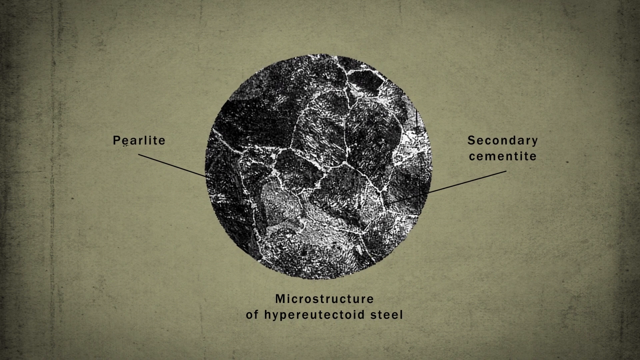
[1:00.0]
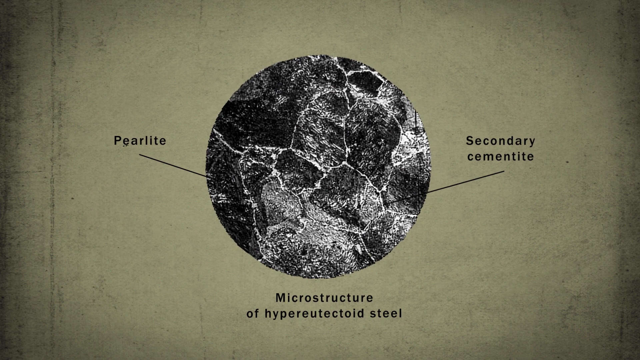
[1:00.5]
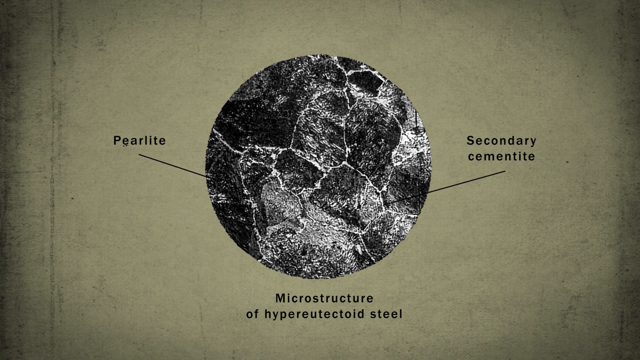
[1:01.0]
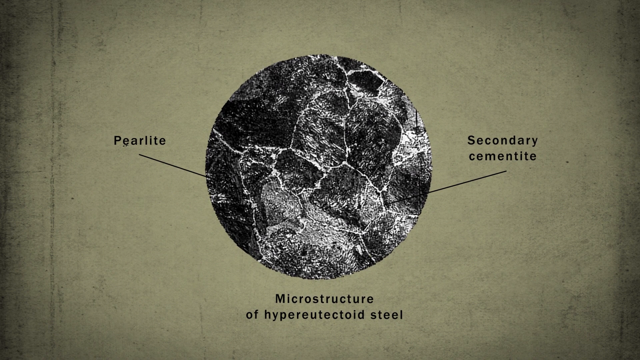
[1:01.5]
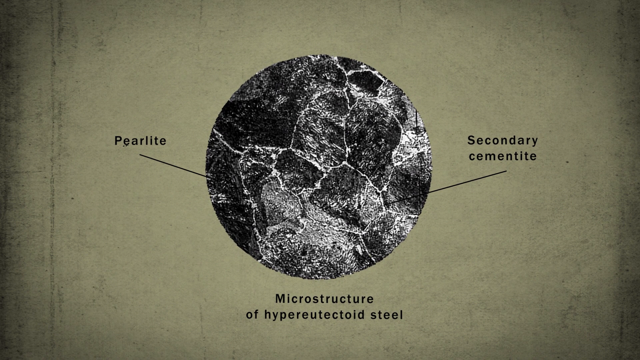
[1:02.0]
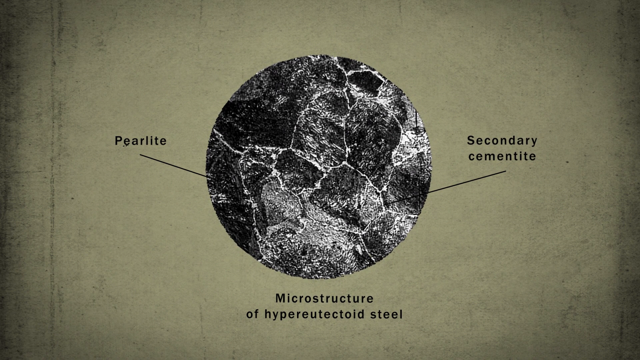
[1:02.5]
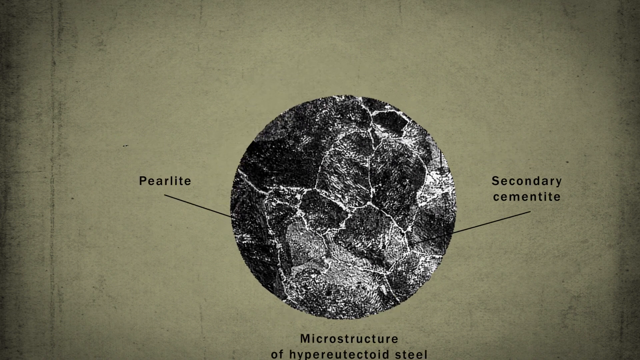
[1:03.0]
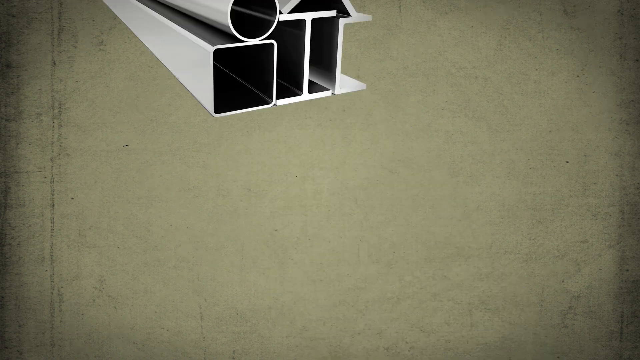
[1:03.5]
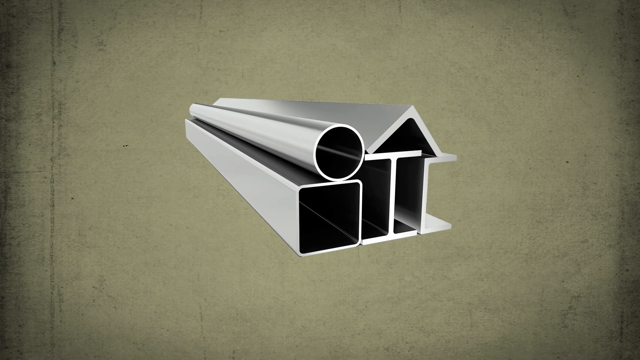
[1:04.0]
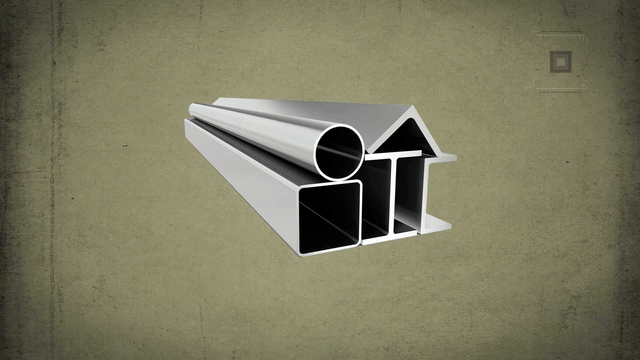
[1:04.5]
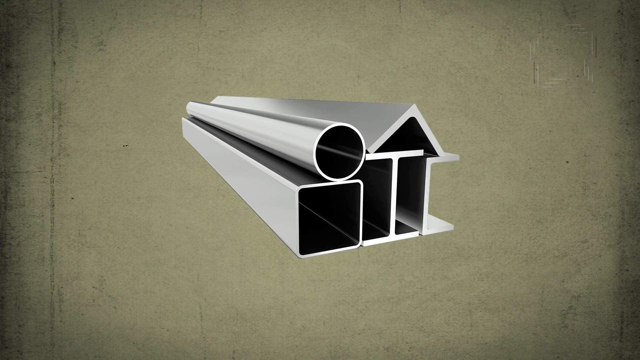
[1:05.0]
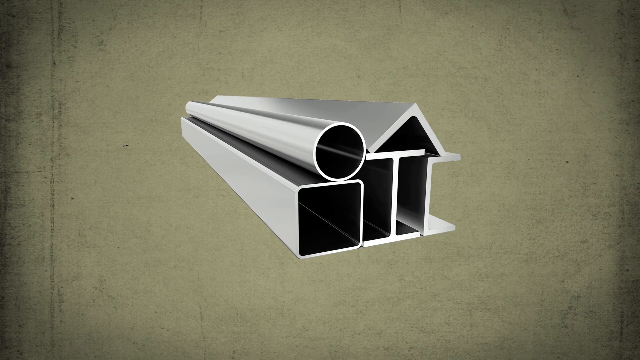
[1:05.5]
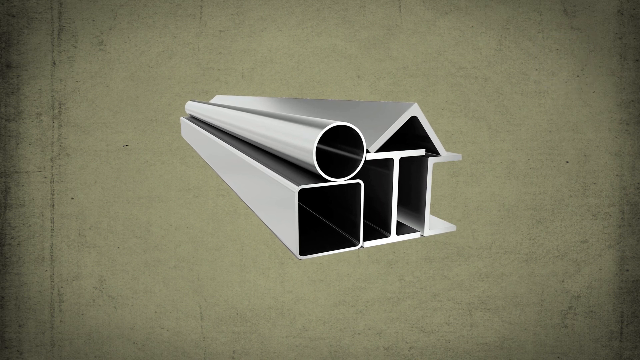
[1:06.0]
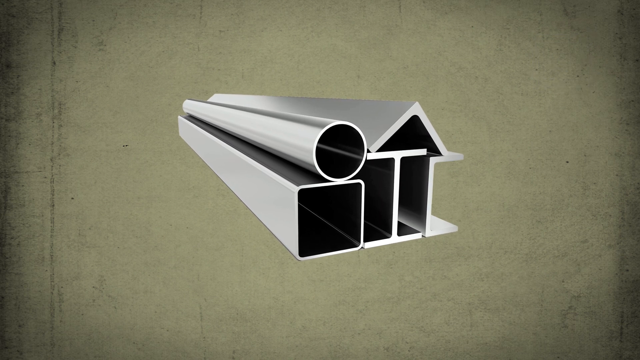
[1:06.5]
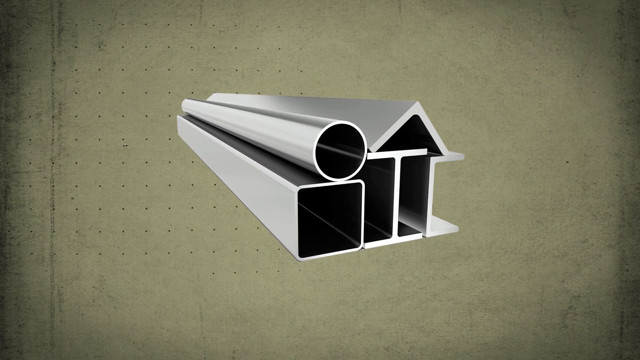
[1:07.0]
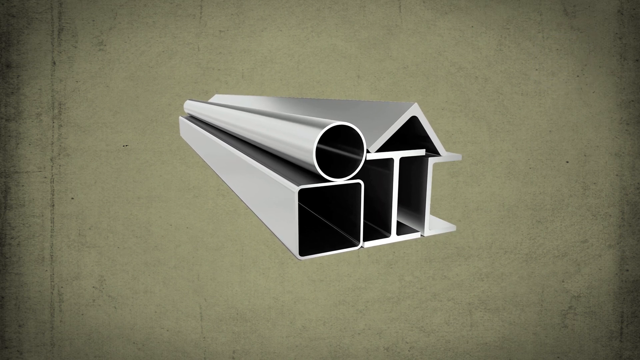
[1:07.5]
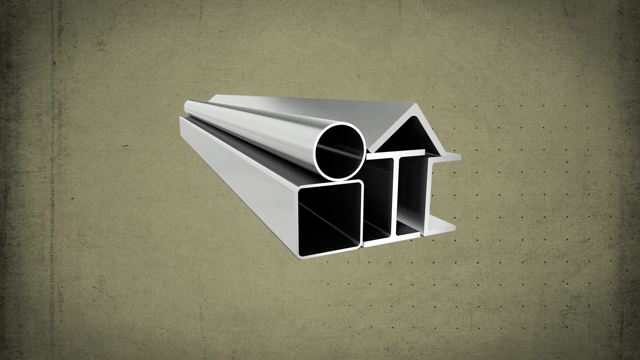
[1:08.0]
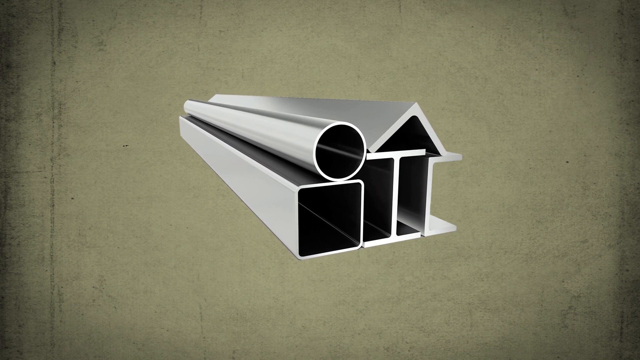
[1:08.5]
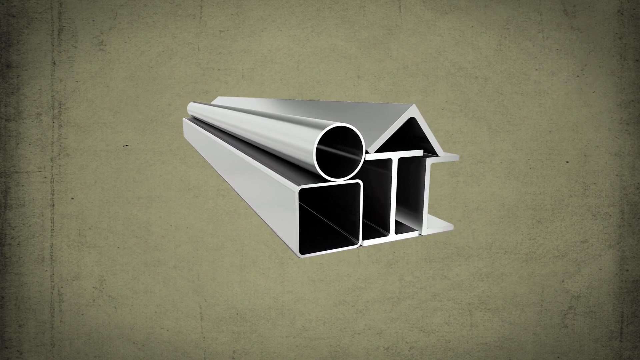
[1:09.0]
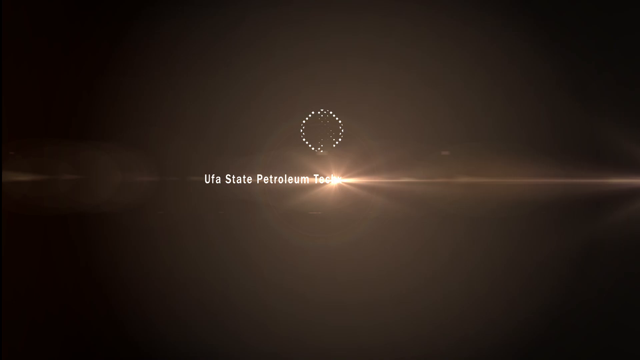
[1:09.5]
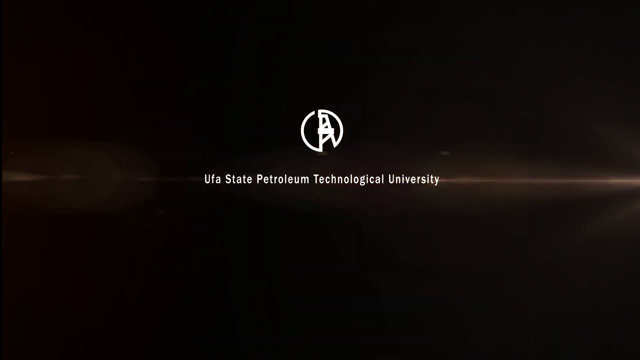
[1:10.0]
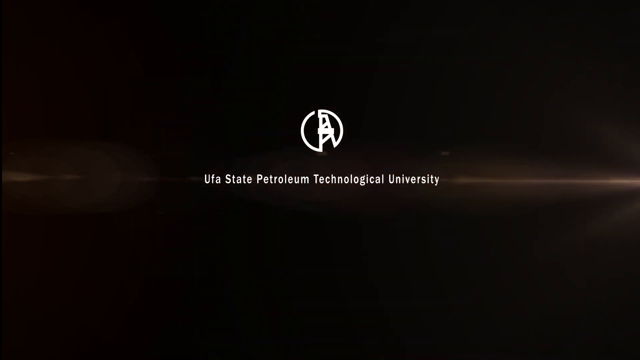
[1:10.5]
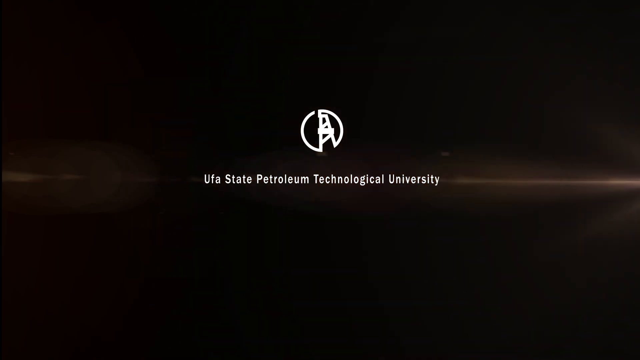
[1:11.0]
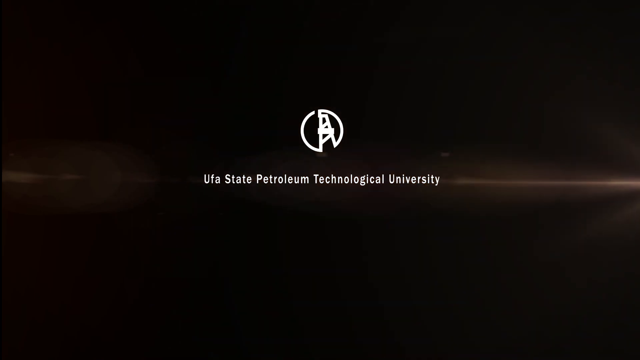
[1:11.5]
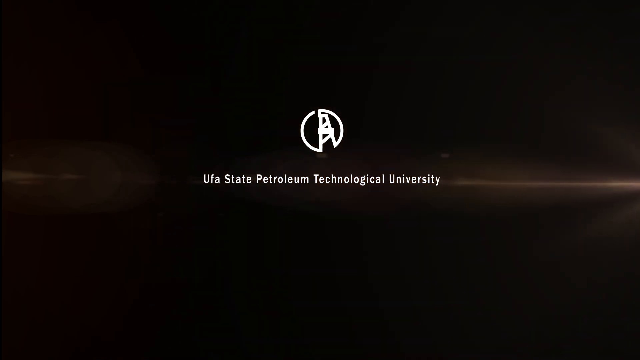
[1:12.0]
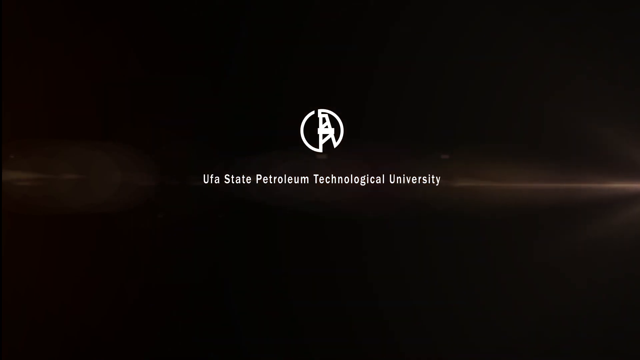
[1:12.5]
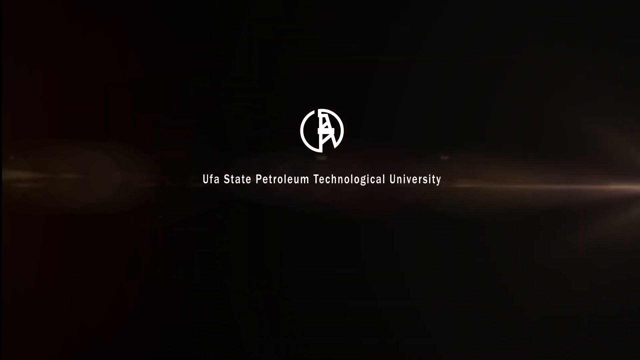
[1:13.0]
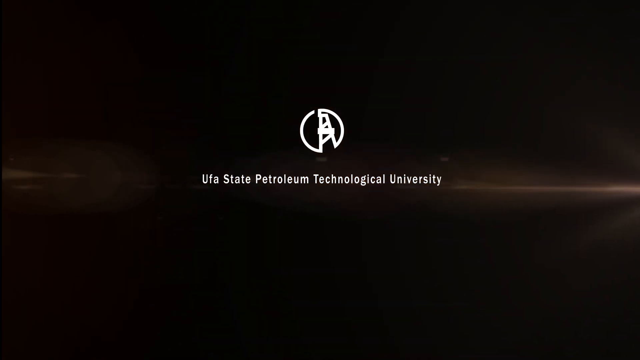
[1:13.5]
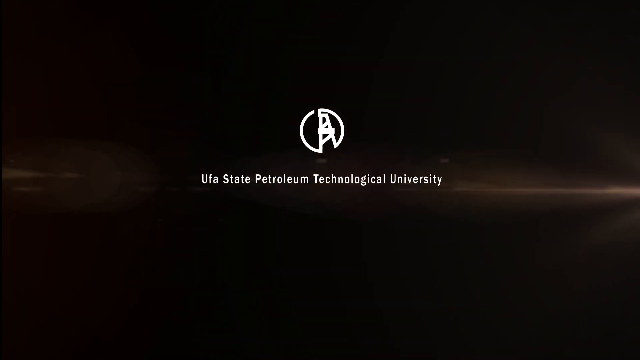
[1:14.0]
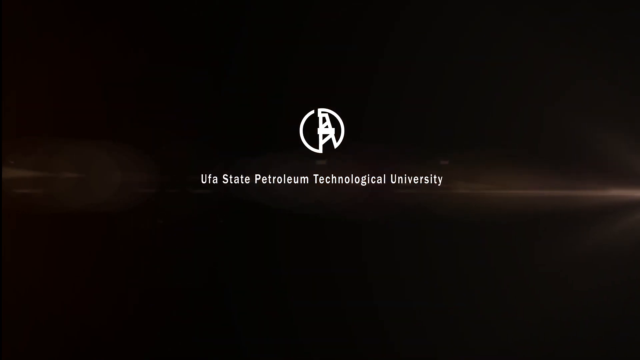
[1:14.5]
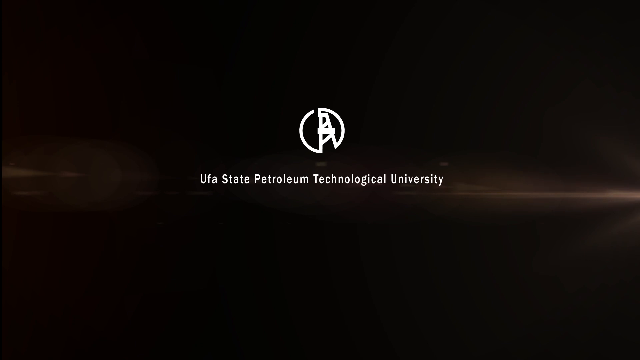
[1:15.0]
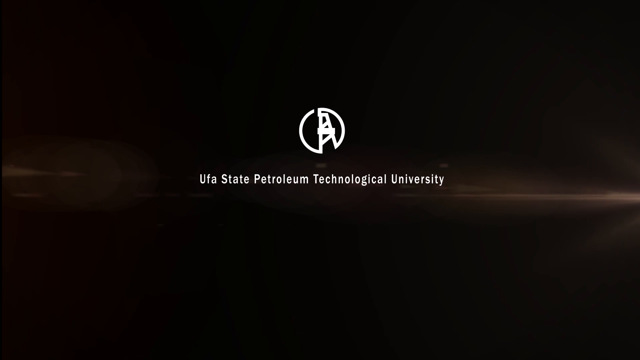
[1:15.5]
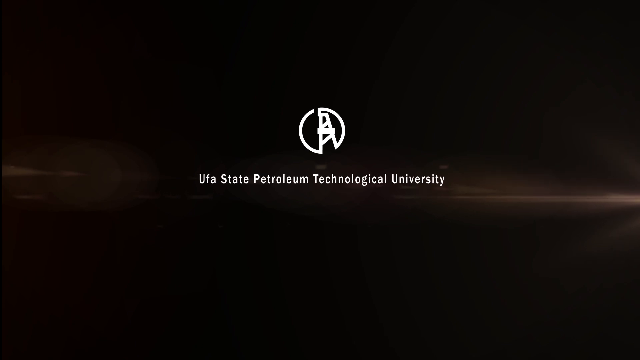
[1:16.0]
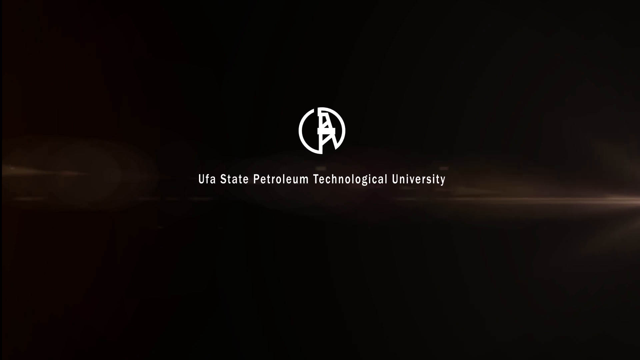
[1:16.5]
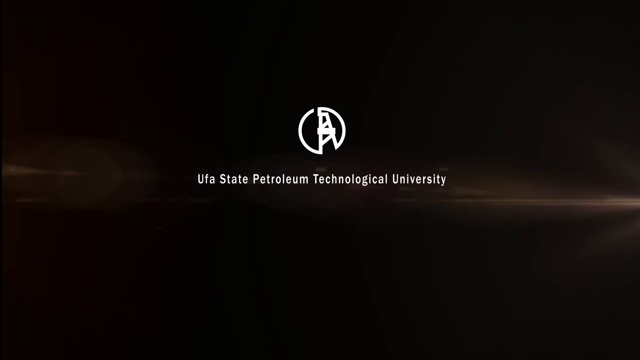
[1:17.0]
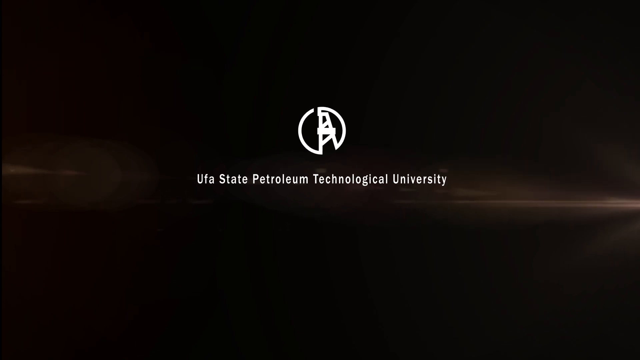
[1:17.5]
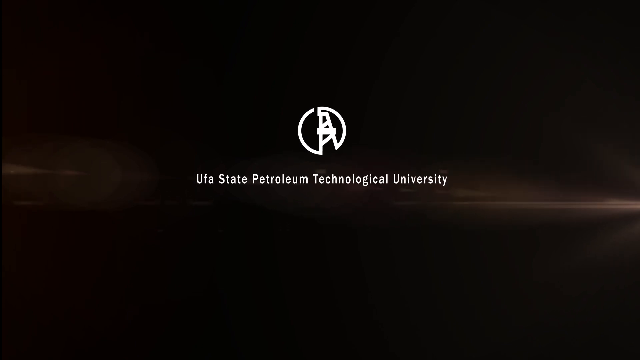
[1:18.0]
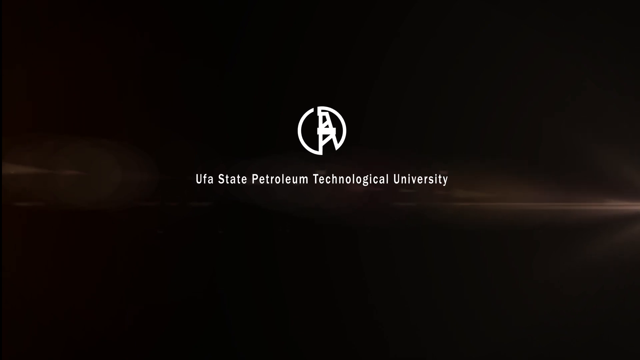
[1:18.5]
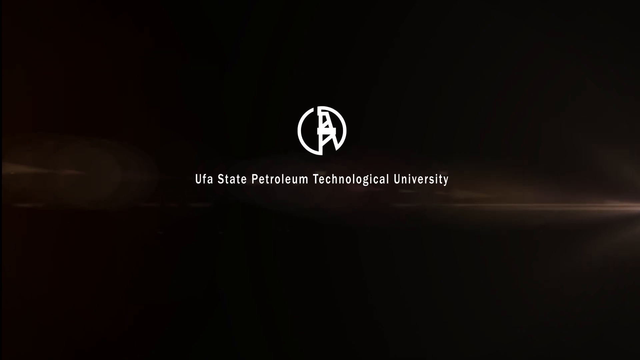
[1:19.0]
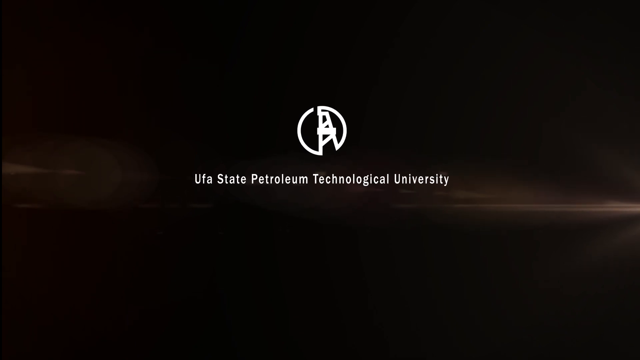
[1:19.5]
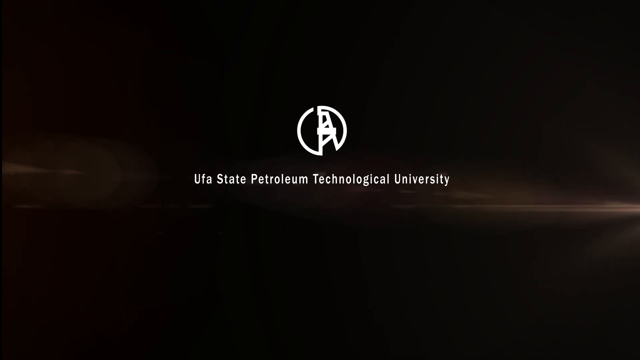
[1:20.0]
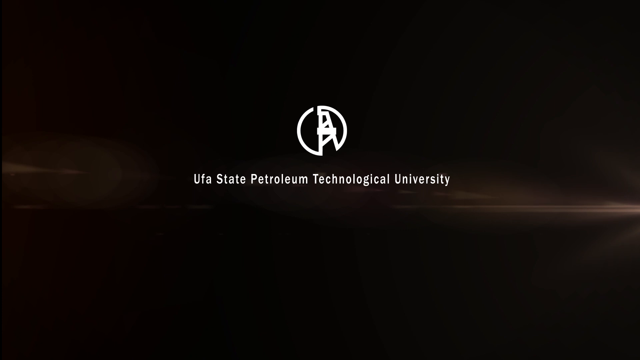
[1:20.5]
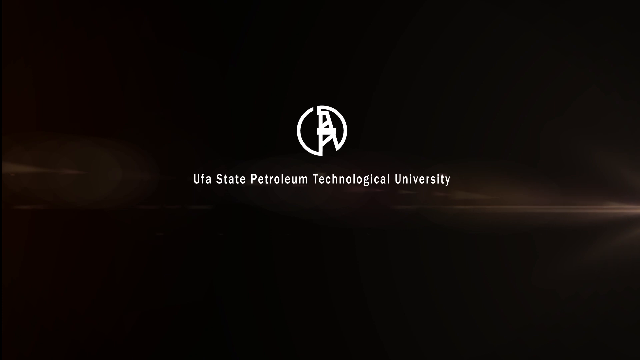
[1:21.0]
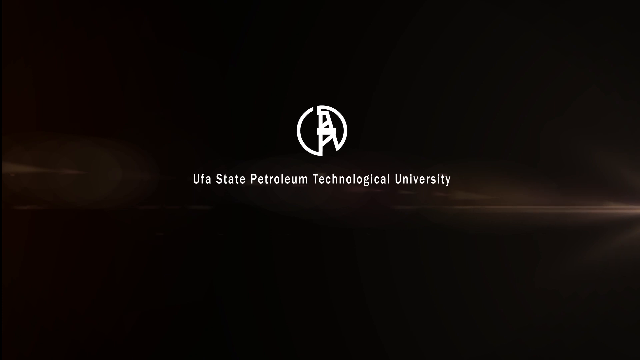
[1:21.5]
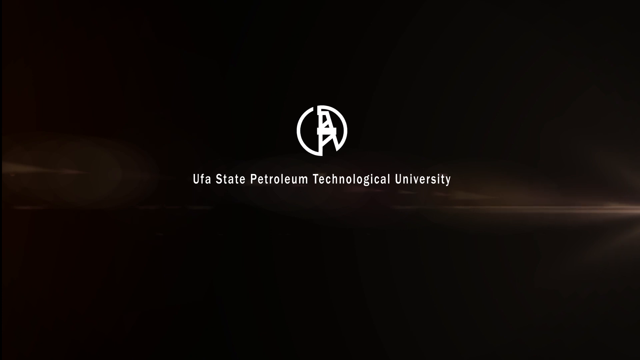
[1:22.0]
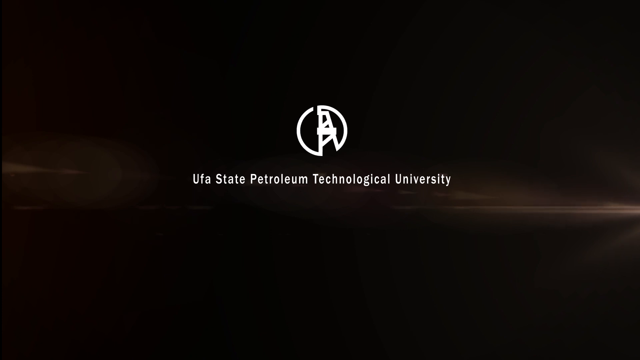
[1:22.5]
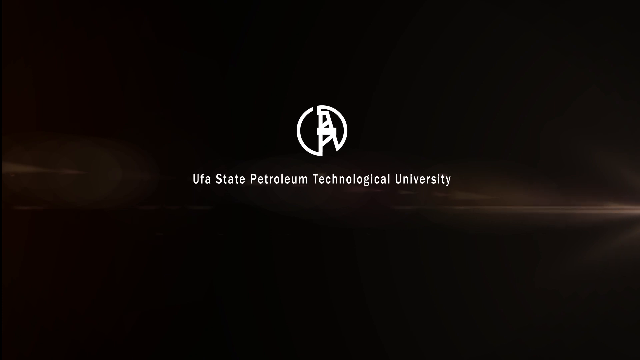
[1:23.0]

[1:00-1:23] A small design, a little structure, appears in the middle of the screen. At the bottom left there is something like a long square tube on top of a circular tube. In the middle is what looks like a metal beam, with another, more triangular beam on top, so it looks somewhat like a house. At the bottom right there appears to be another beam facing outward. The screen then goes black, and an image pops up: a small white symbol with the words "UFA State Petroleum Technology University" underneath. The background is all black, with some lighting toward the middle; it looks like light shining through where the university's sign or logo is.